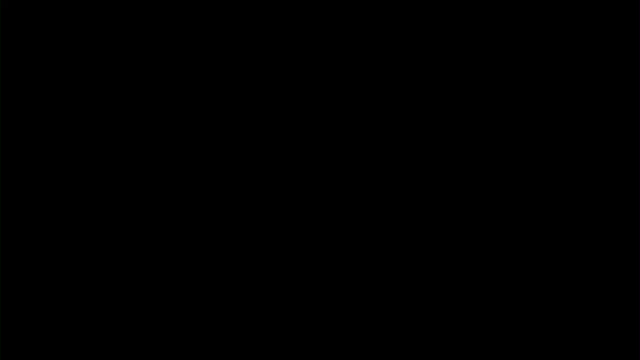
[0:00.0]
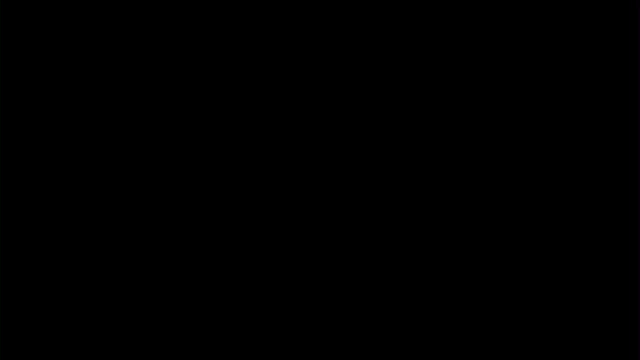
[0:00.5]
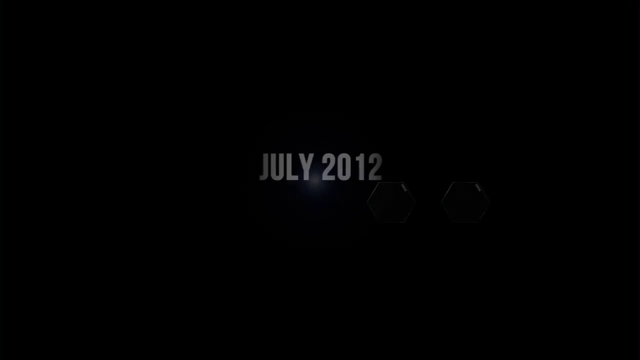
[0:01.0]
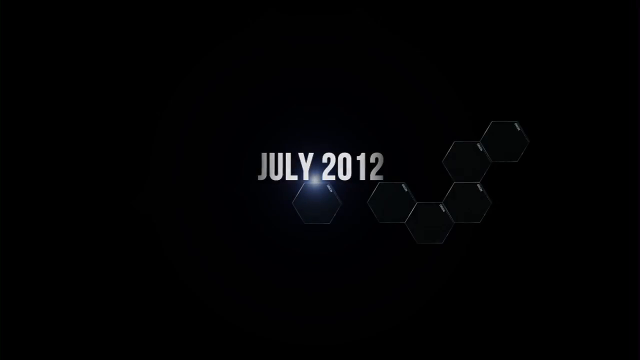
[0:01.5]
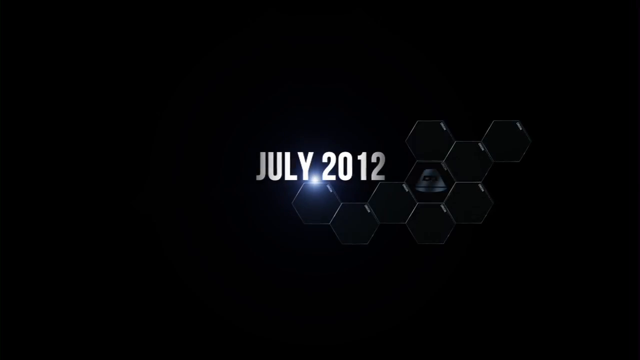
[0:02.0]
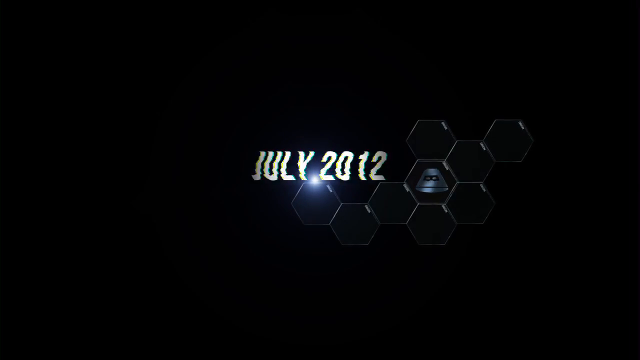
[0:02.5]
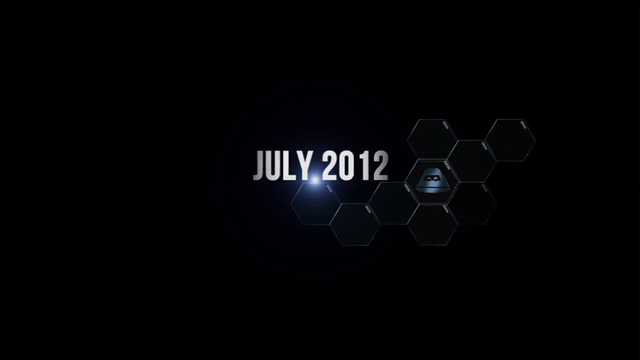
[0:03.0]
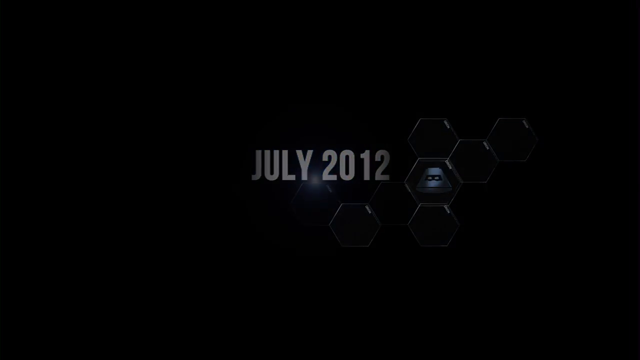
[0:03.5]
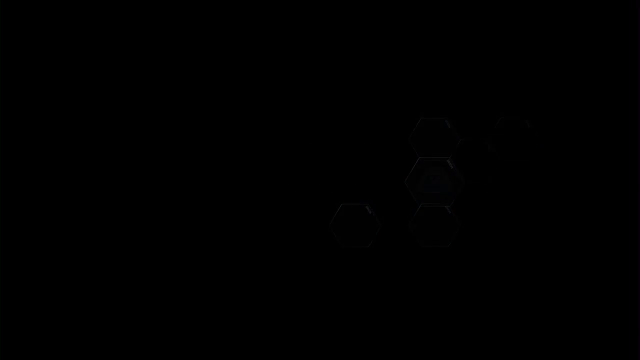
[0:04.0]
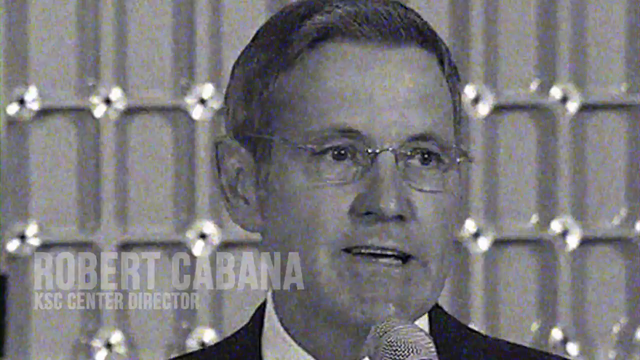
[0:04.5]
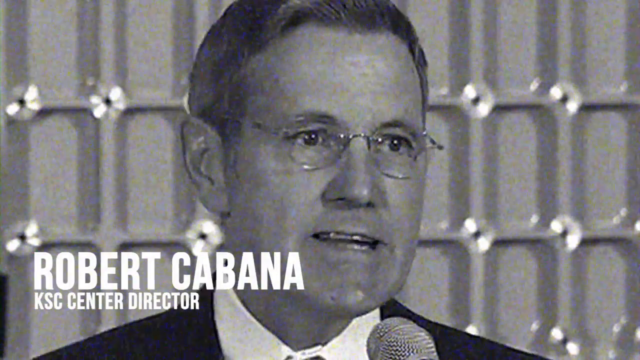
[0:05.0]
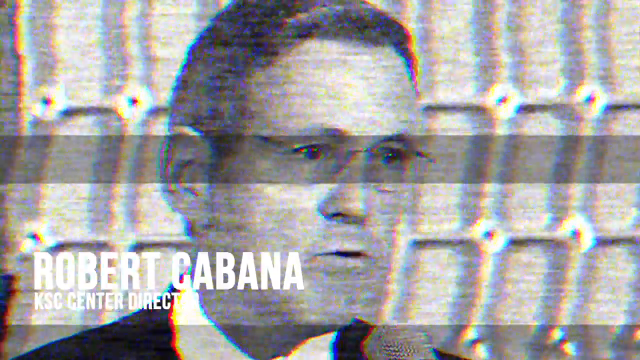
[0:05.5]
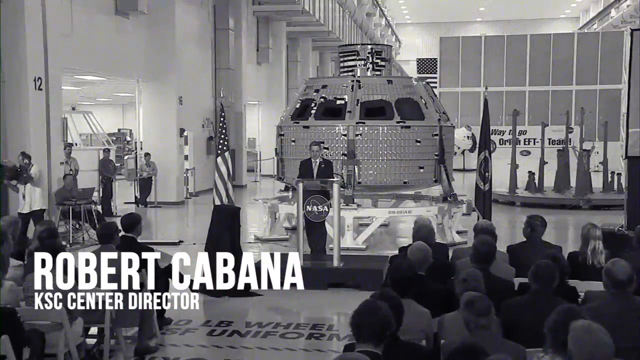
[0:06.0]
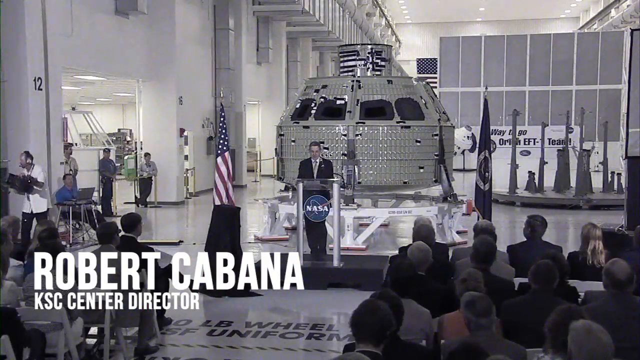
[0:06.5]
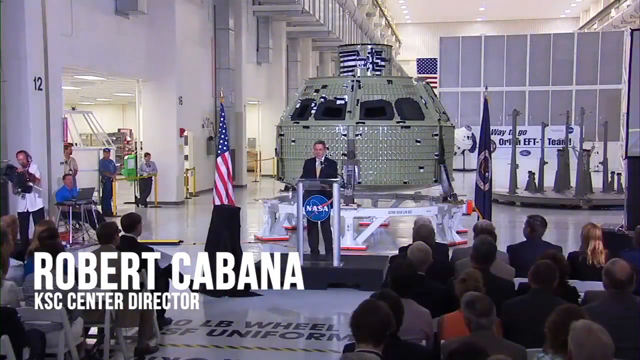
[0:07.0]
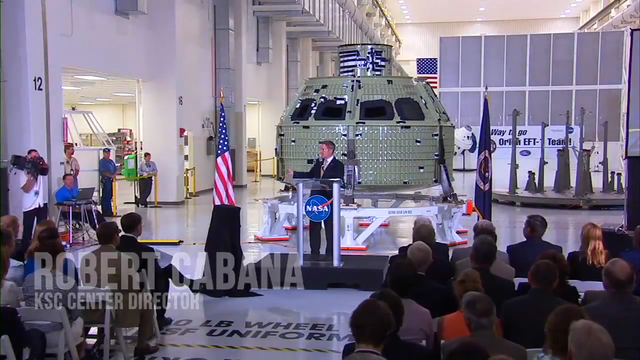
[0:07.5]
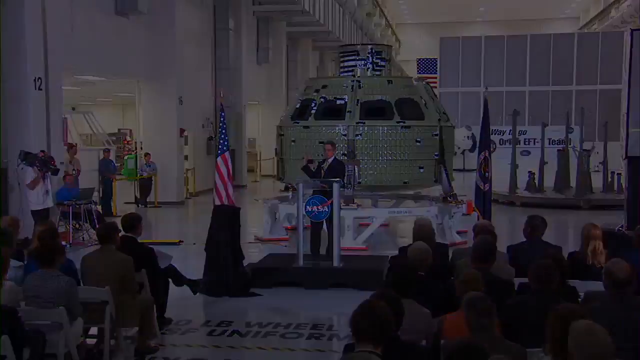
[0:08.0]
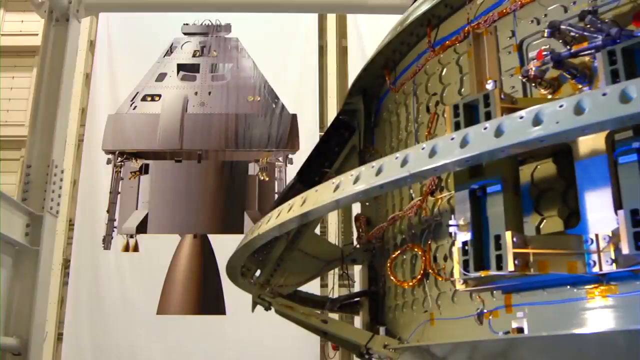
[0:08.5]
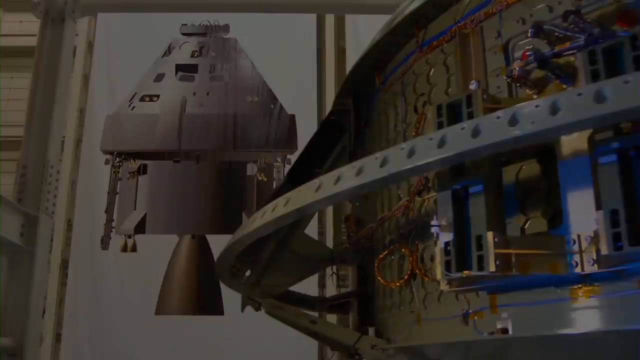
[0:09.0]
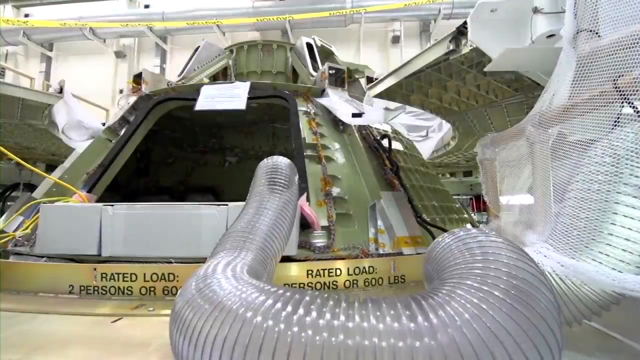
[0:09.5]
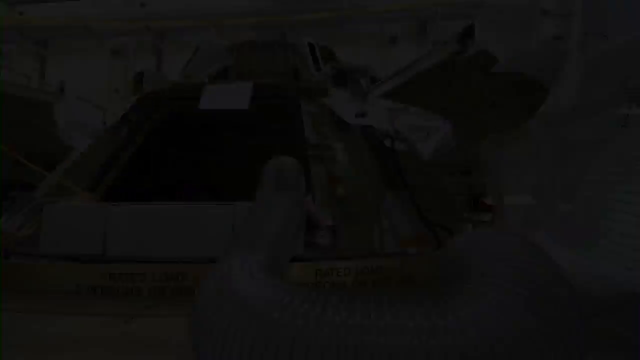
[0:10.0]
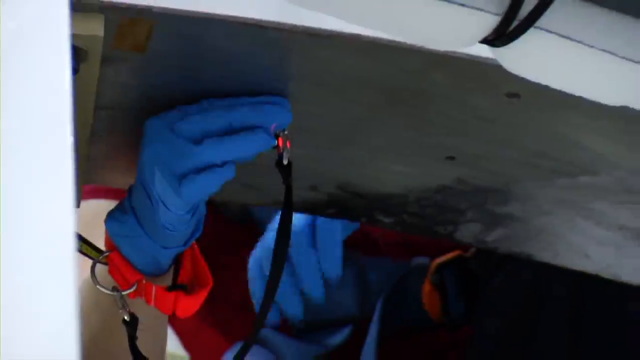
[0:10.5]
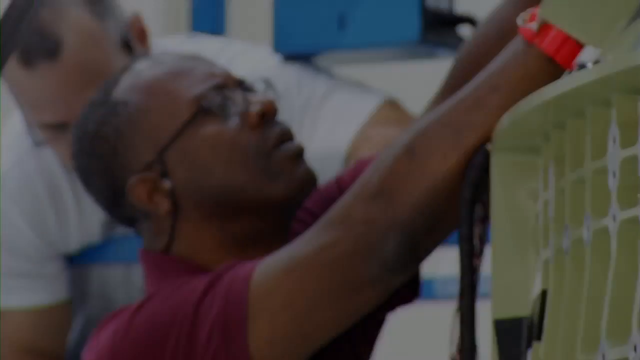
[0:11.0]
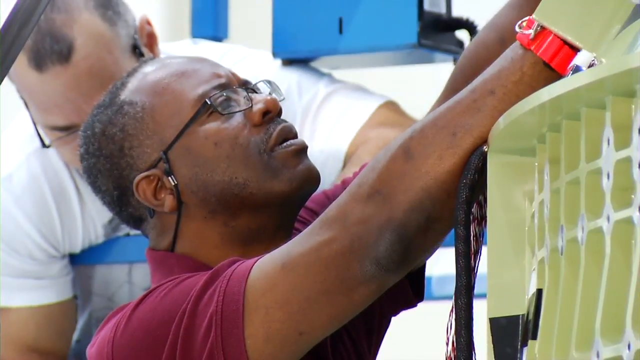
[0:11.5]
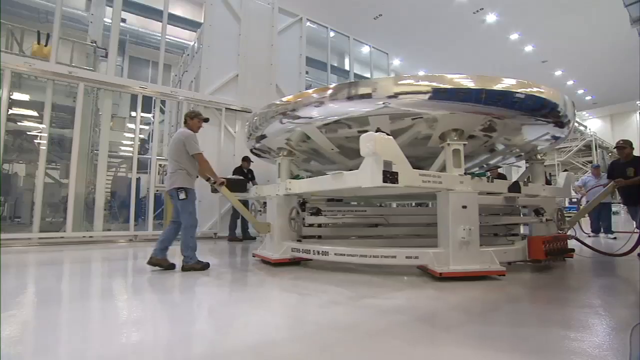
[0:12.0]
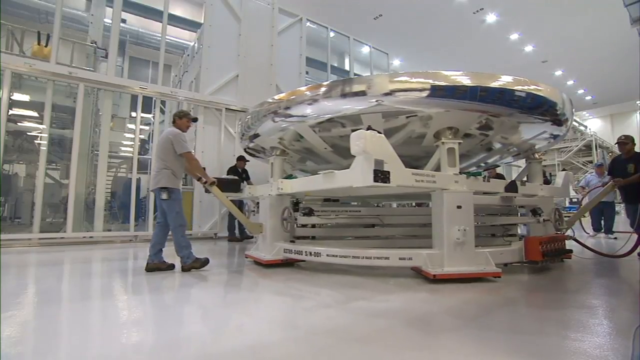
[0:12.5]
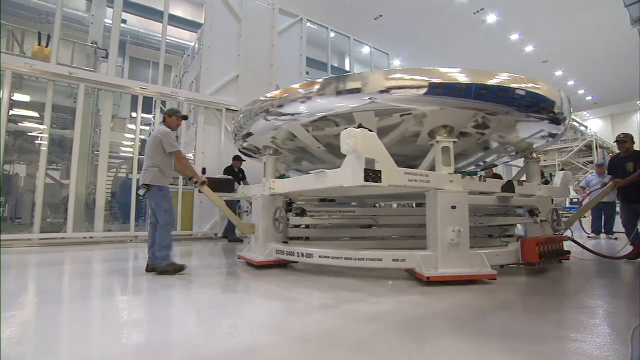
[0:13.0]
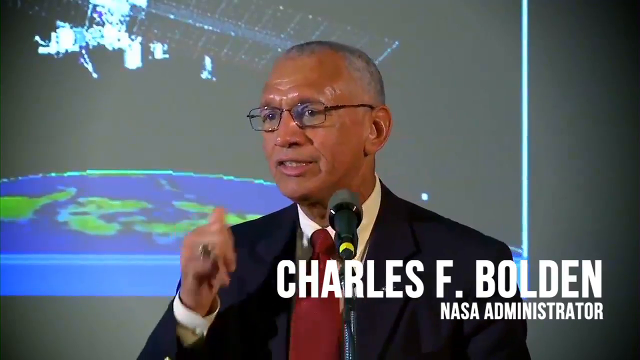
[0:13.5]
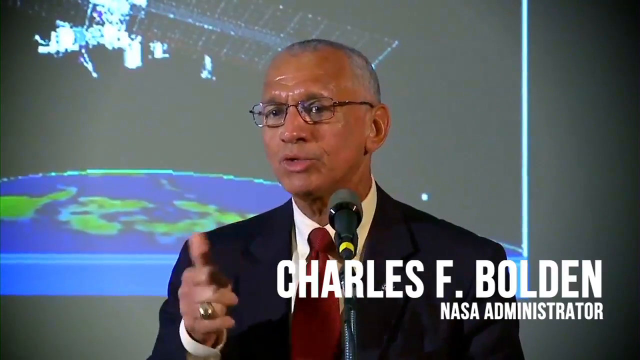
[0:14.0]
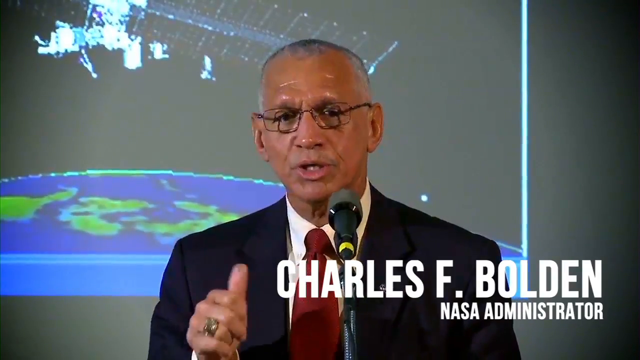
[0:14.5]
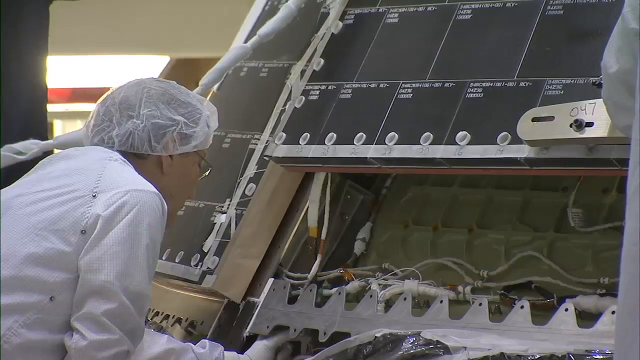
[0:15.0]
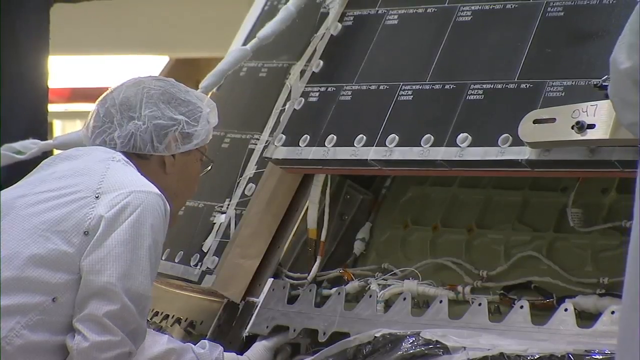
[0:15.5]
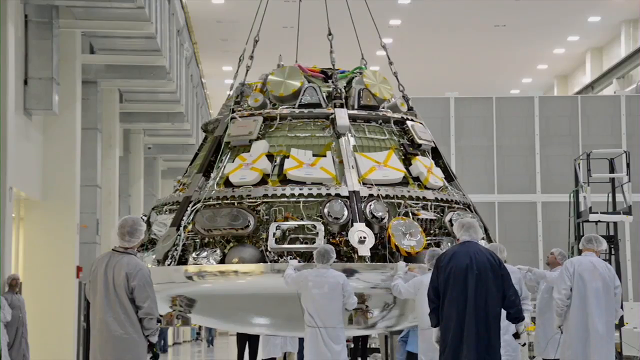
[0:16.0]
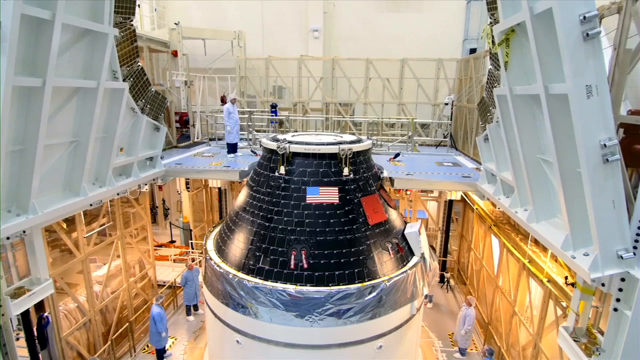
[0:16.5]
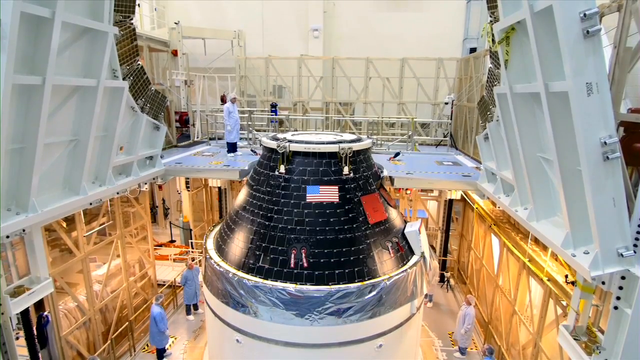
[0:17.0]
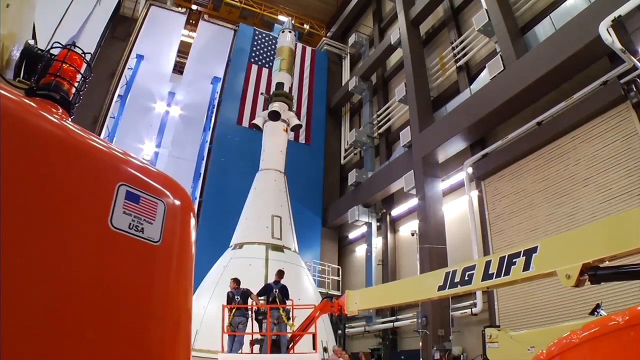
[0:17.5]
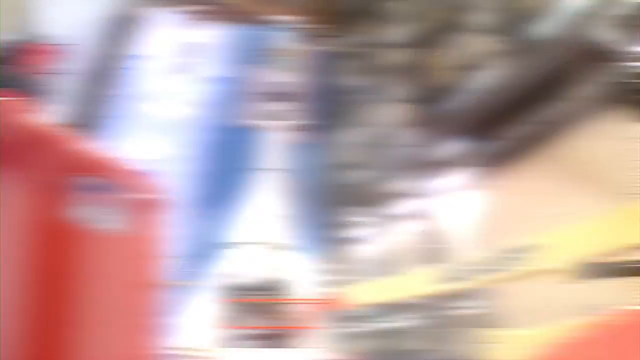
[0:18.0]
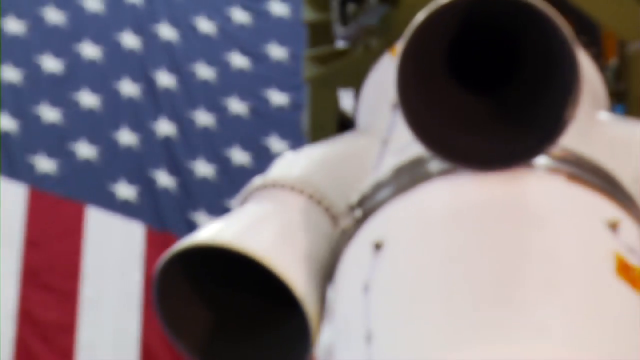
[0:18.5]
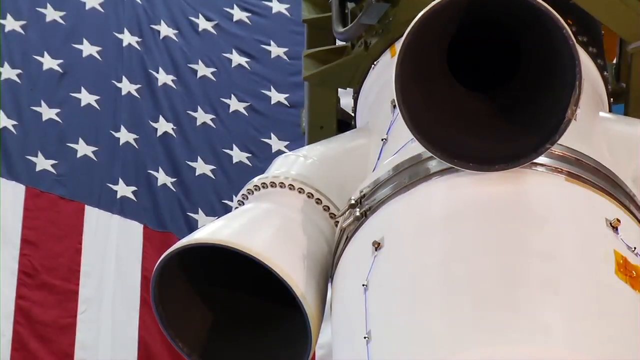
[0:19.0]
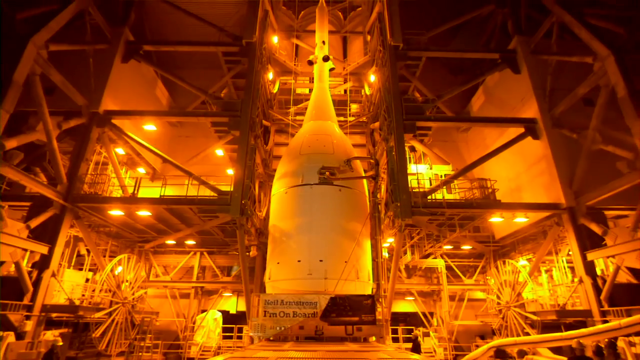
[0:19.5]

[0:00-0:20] The video opens with "July 2012" shown against a number of hexagon shapes on a black background. It transitions to black-and-white footage of Robert Cabana, the KSC Centre Director, giving a talk with a space capsule behind him. The view pulls back to show him standing at a NASA podium with an American flag to his left. Various security guards are further to the left, along with a camera crew, and seated guests in front of him watch as he gives the presentation. The same scene then appears in colour, revealing the colours of the American flag and showing that the space capsule is light green. Views inside a factory show how the capsule is constructed: the capsule without its outer panels, and various workmen manoeuvring parts of the capsule around the premises. Footage follows of another speaker, Charles F Bolden, the NASA Administrator, and then more footage of different components of the capsule being assembled inside the factory. Finally, the rockets appear.